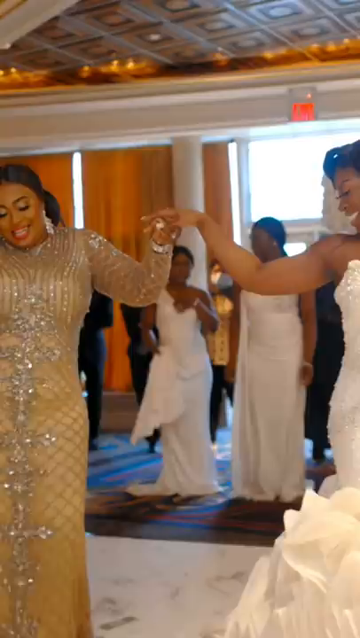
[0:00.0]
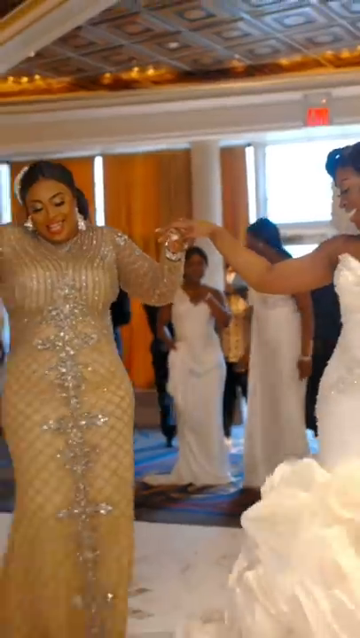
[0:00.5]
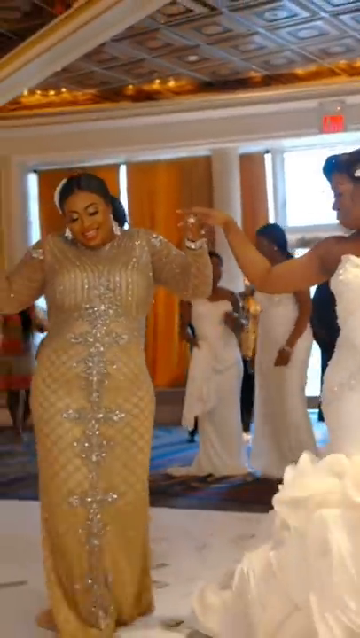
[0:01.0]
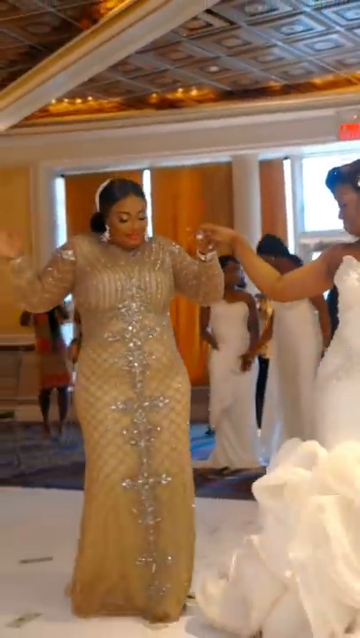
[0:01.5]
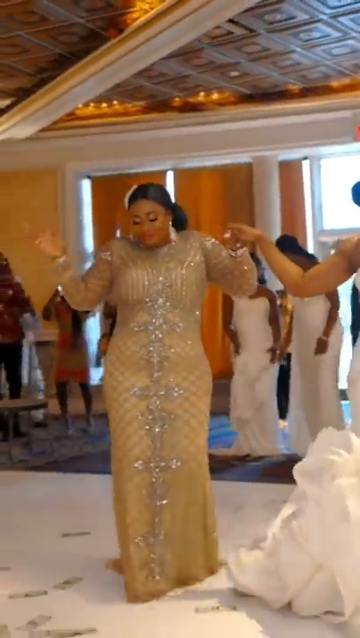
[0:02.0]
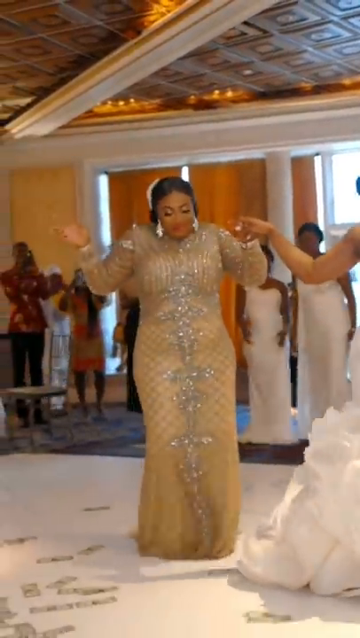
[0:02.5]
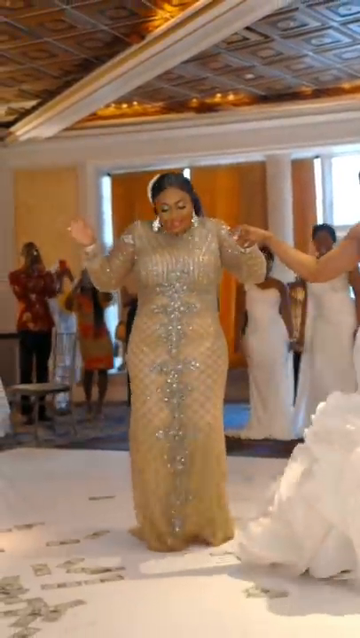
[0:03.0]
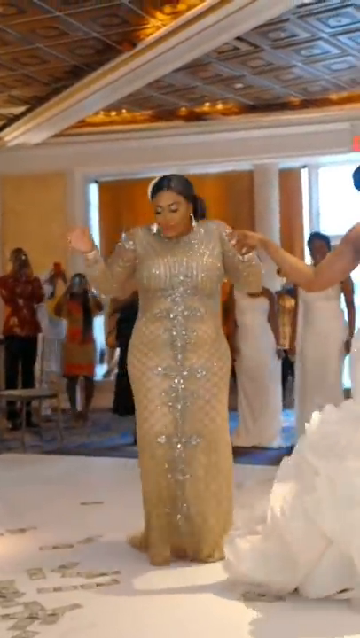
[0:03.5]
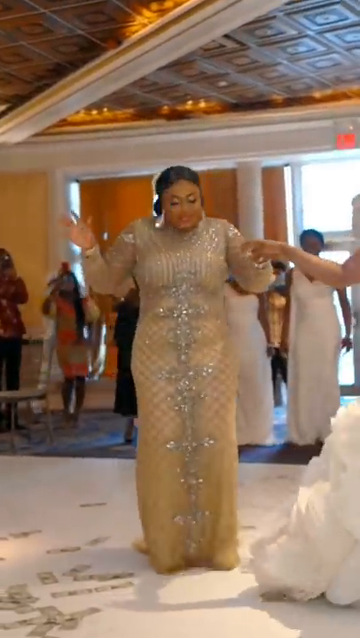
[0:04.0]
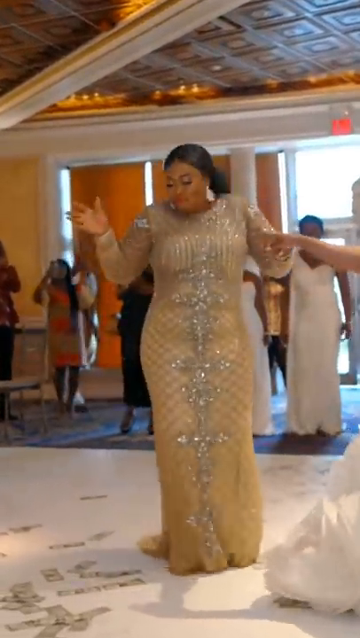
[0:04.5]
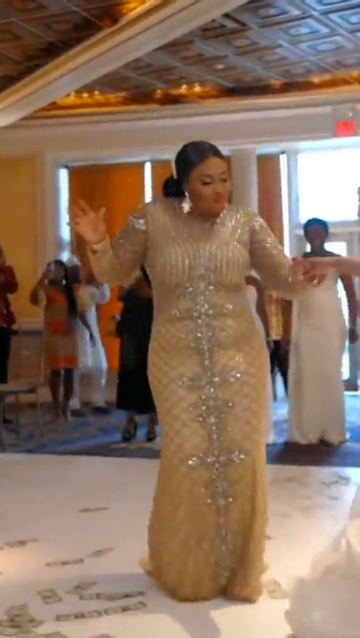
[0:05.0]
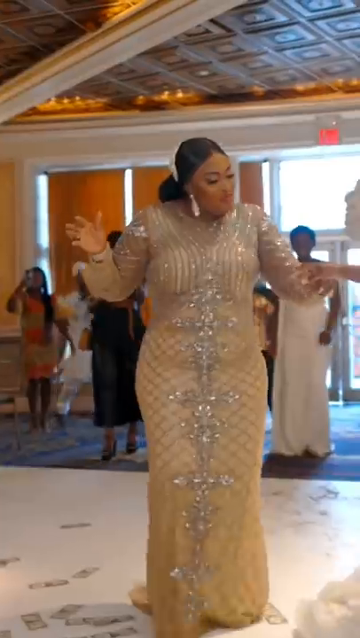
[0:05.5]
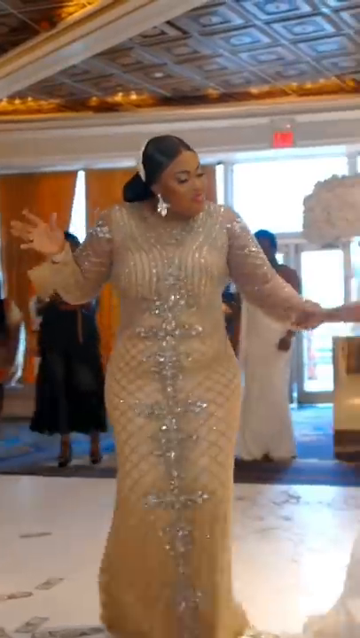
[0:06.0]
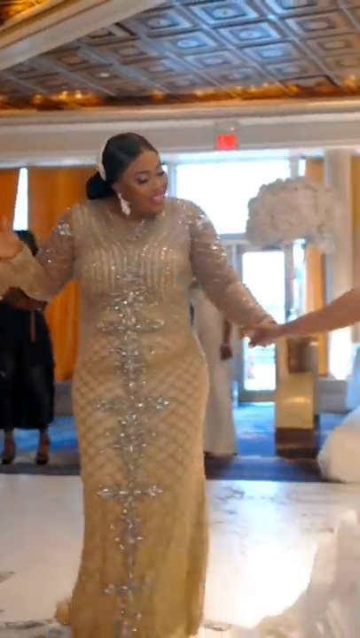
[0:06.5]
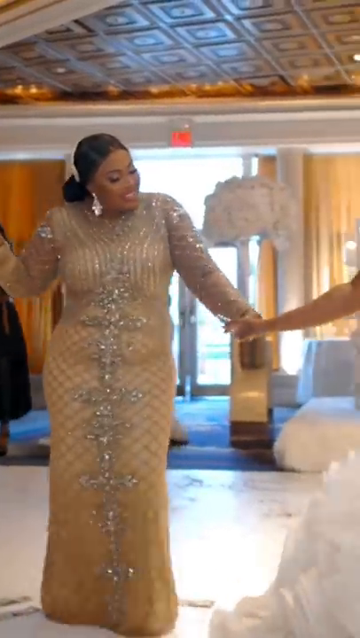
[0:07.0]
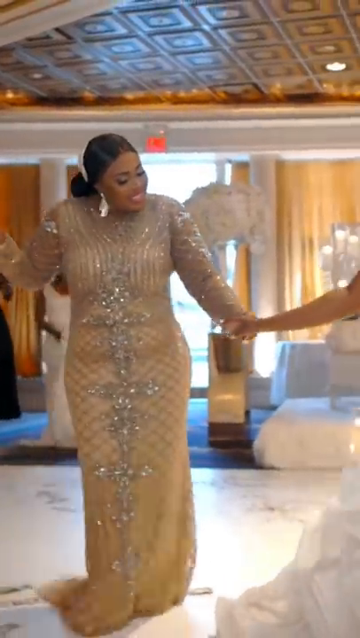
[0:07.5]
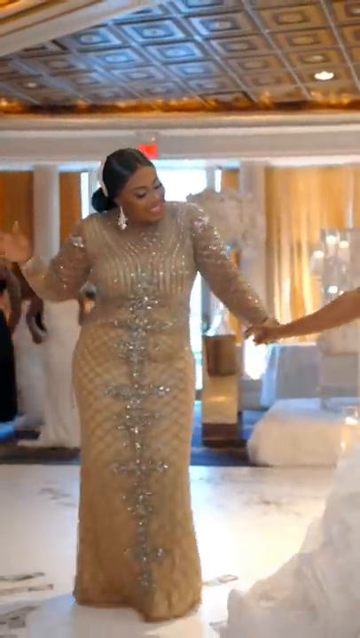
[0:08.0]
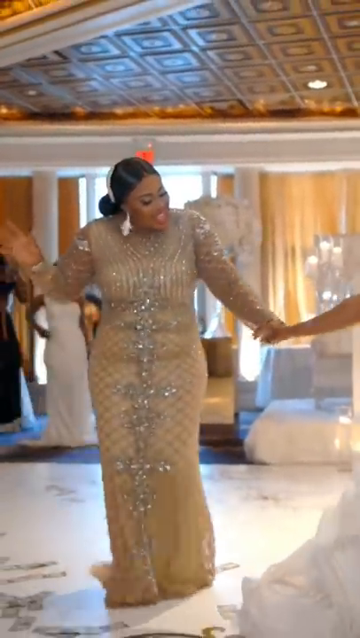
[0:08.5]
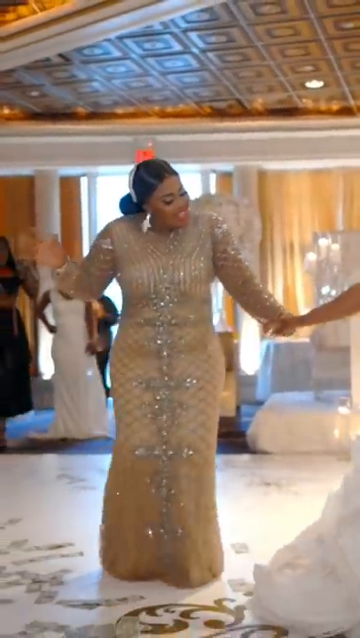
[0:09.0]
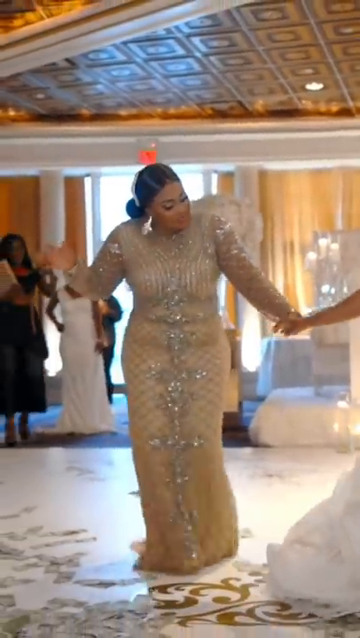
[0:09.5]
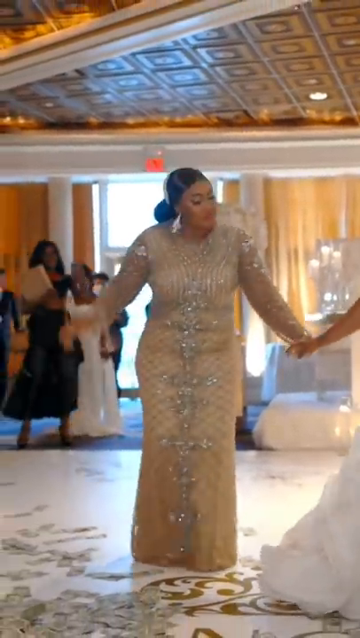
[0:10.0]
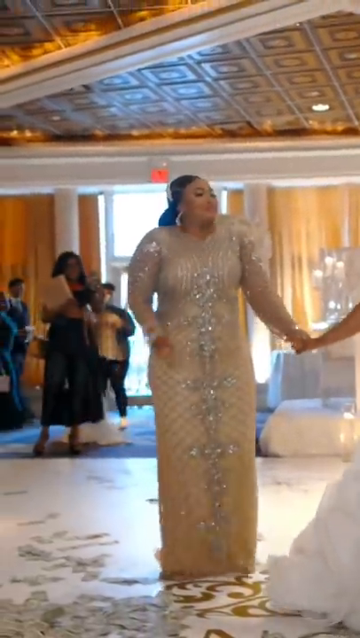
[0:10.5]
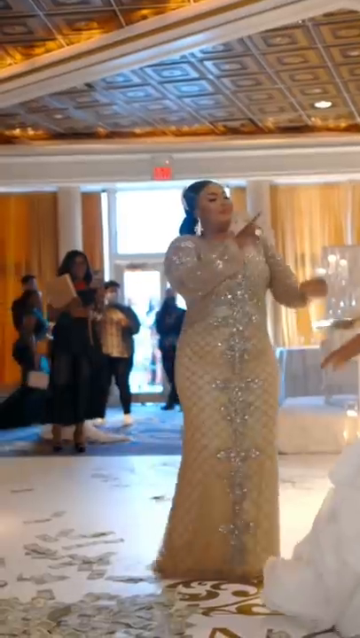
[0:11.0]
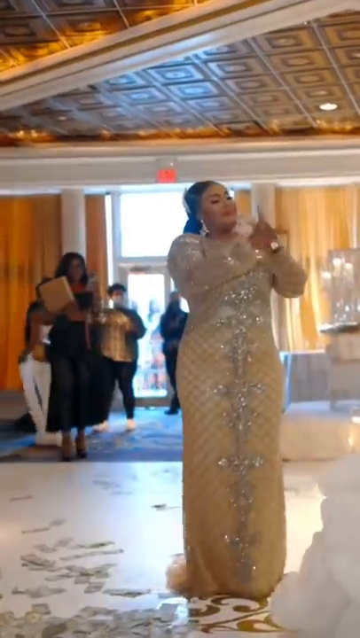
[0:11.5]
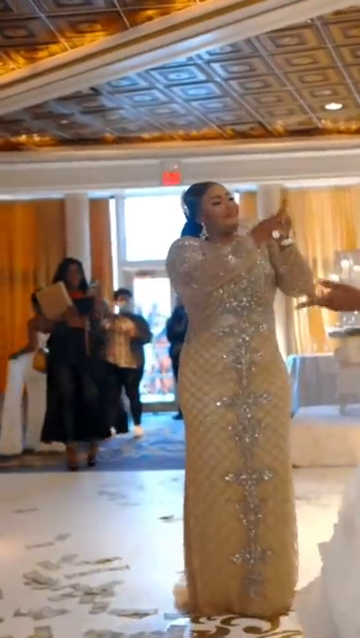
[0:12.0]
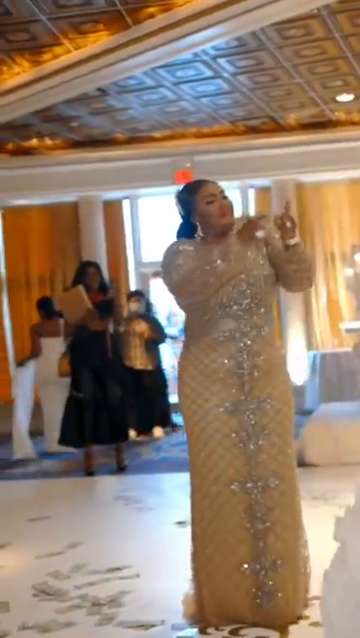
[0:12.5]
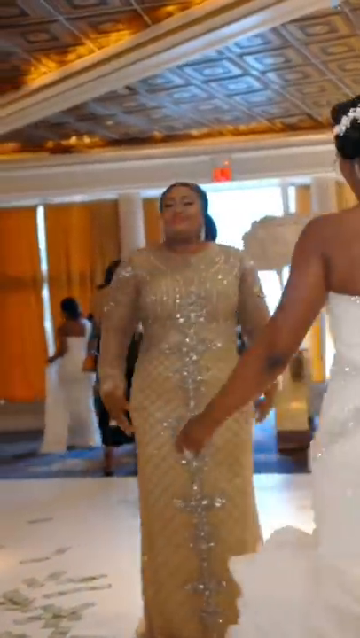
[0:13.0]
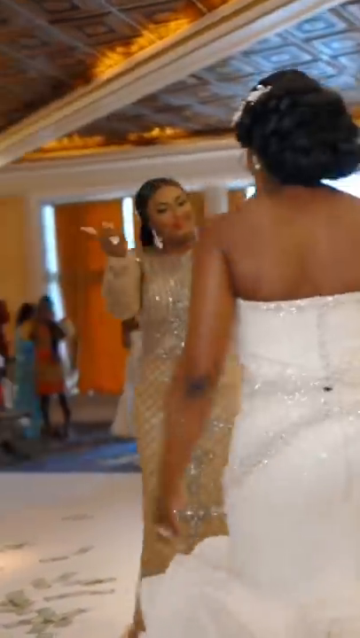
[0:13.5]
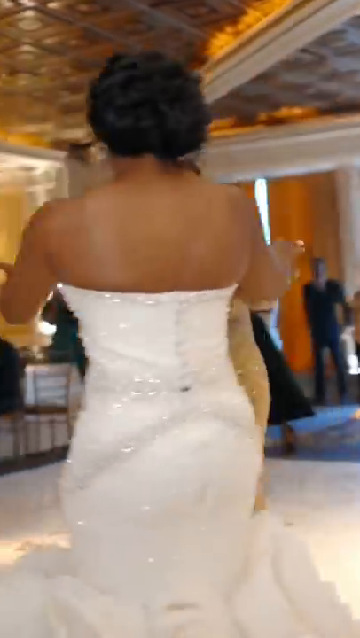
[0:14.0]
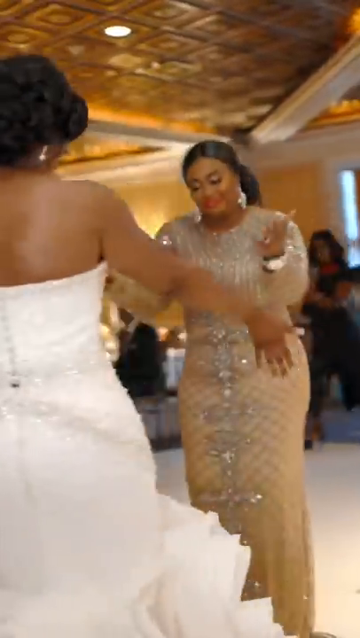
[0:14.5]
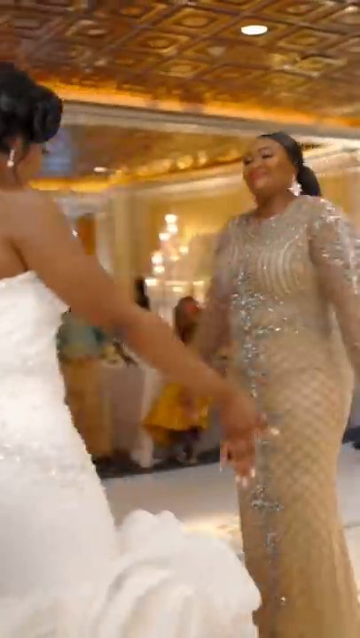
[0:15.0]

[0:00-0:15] The video is titled bride's mother is a whole mood and is by Maxwell Jennings. There seem to be two African-American women dancing, apparently at a wedding. Apparently the bride is not wearing white while all the bridesmaids are wearing white. The bride wears a gold dress with silver crosses, like the Christian cross, on top of the dress all the way down, along with nice earrings. She shakes one hand while holding her left hand onto one of the bridesmaids or the bride's mother, and they are having a good time dancing. She shakes her hand and then does a finger-gun point at the other woman. She wears a really big ring, maybe a diamond ring. The video then sways to the back of the woman; it is unclear whether this is the bride's mother or whether the woman on the right is the bride.